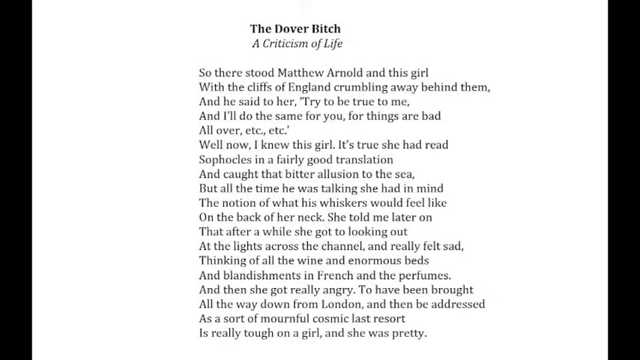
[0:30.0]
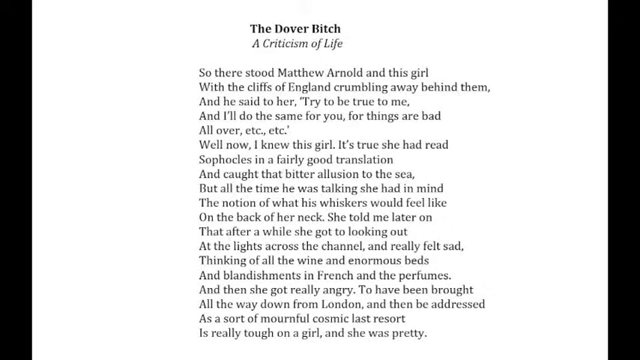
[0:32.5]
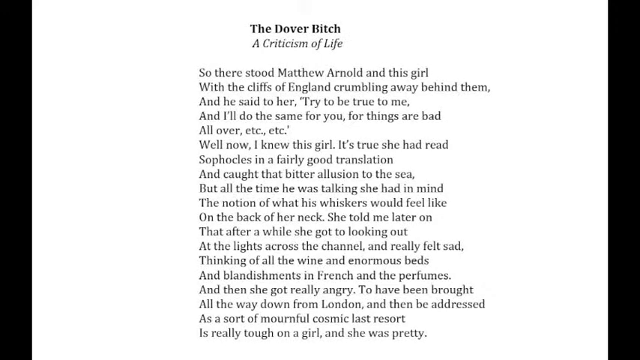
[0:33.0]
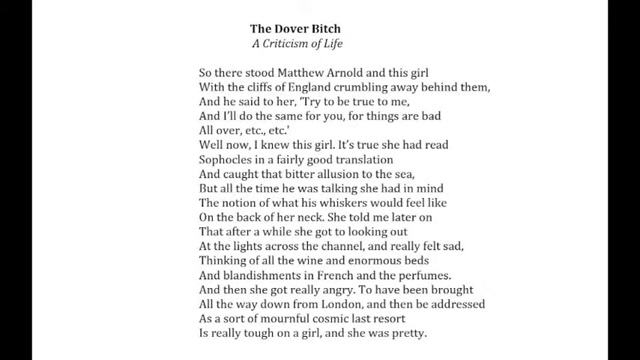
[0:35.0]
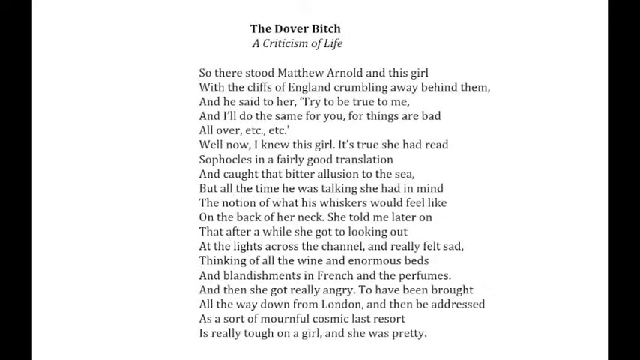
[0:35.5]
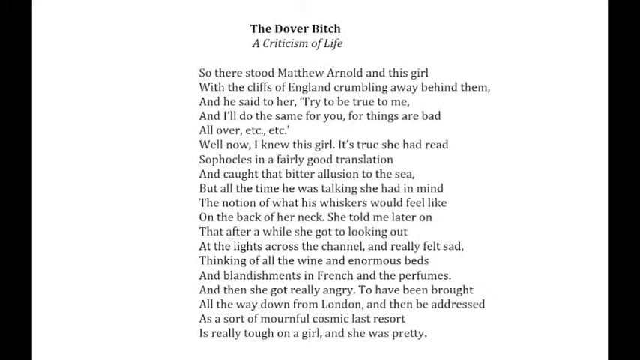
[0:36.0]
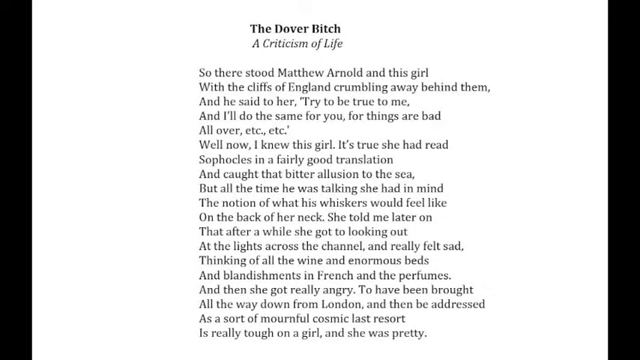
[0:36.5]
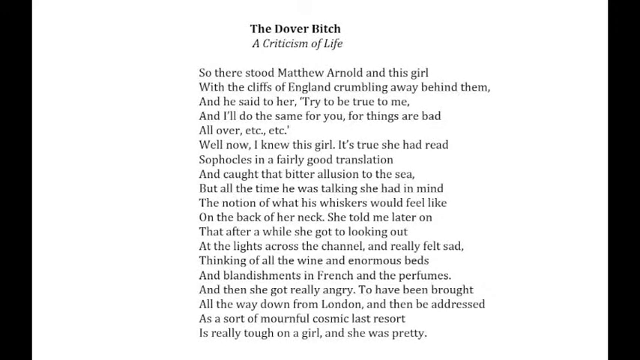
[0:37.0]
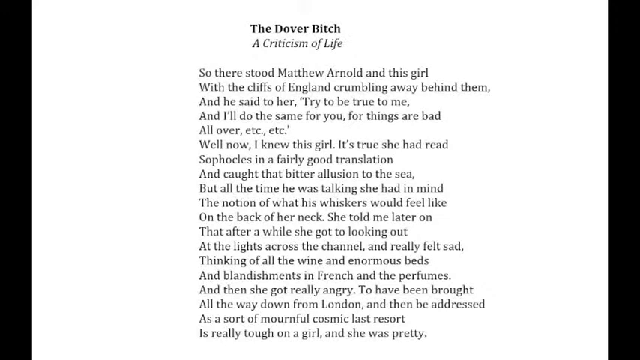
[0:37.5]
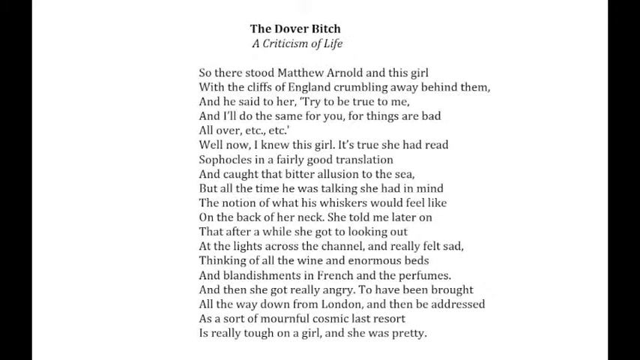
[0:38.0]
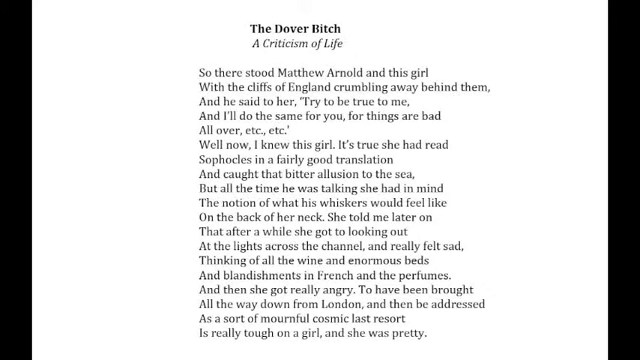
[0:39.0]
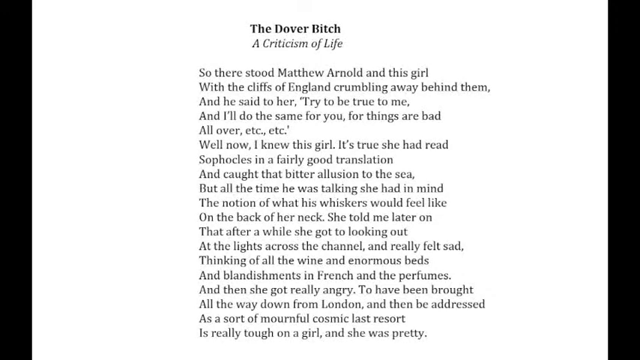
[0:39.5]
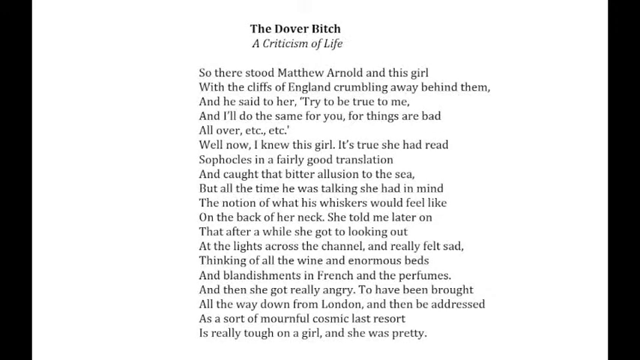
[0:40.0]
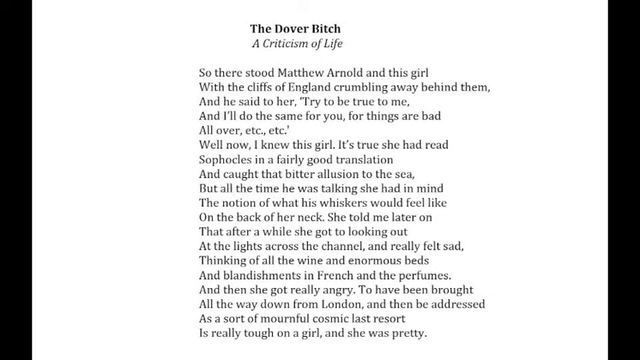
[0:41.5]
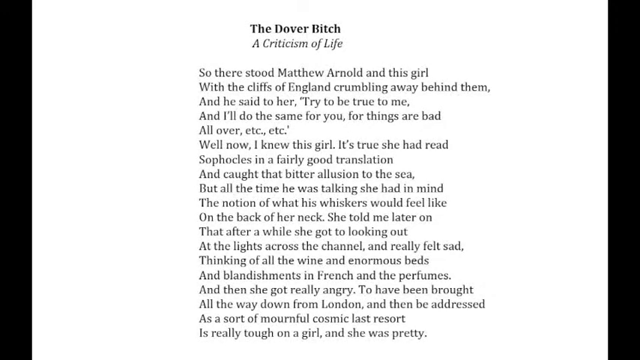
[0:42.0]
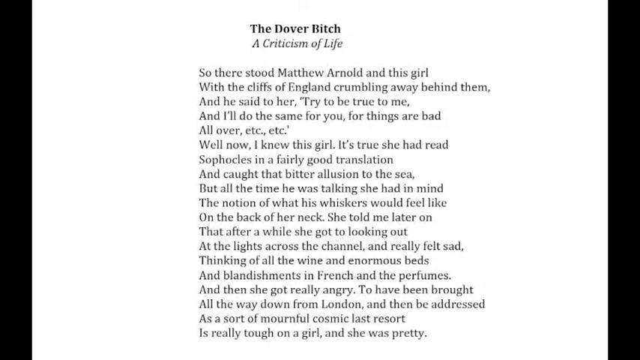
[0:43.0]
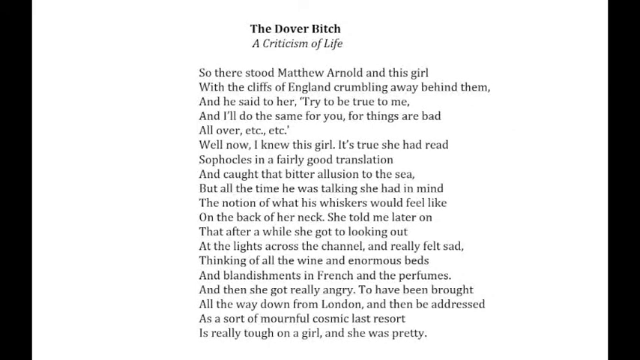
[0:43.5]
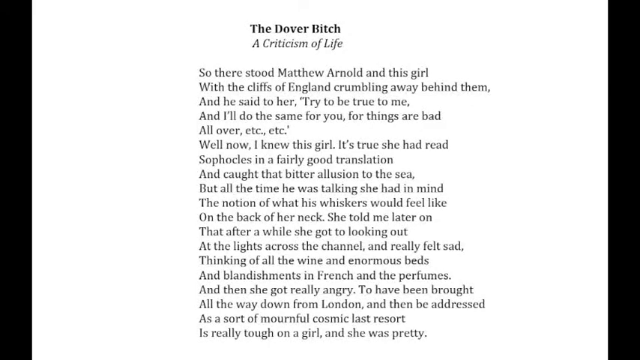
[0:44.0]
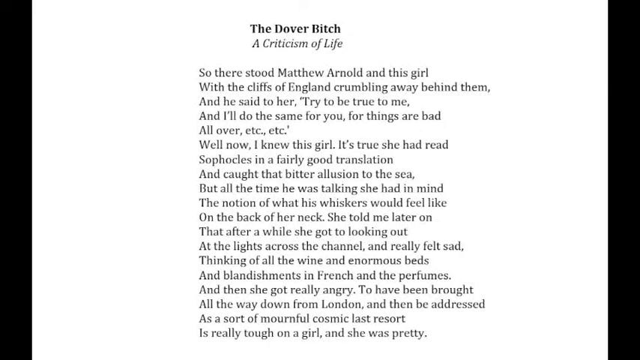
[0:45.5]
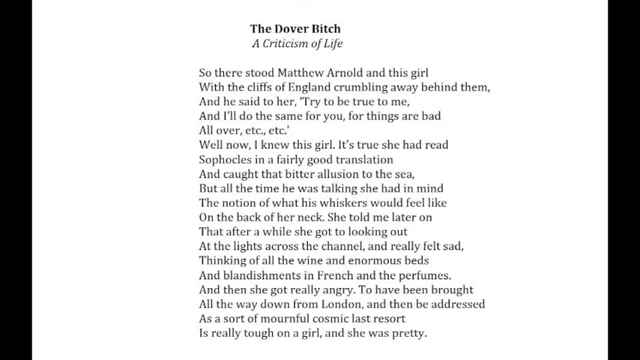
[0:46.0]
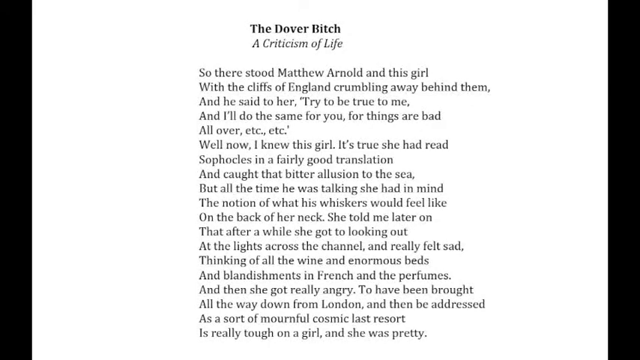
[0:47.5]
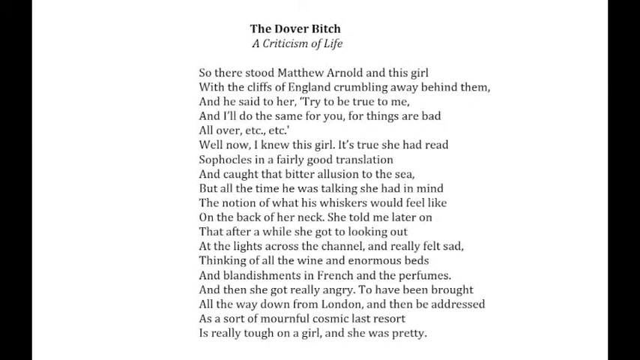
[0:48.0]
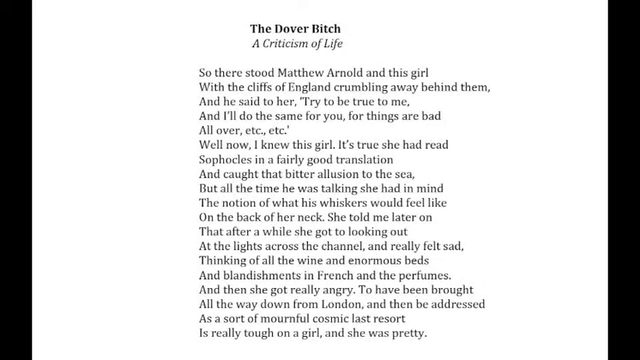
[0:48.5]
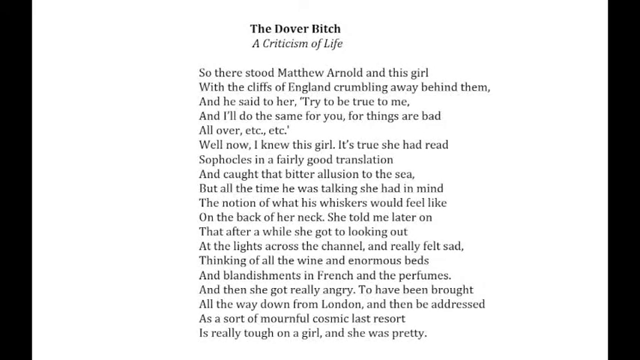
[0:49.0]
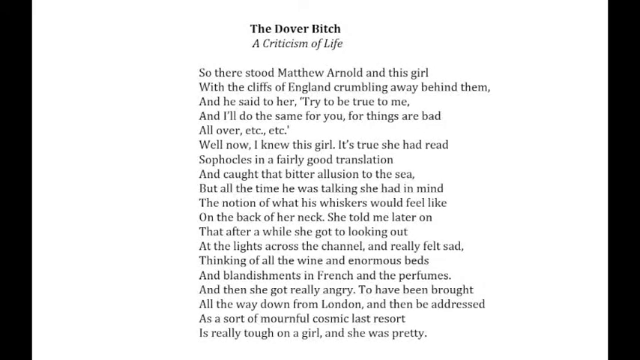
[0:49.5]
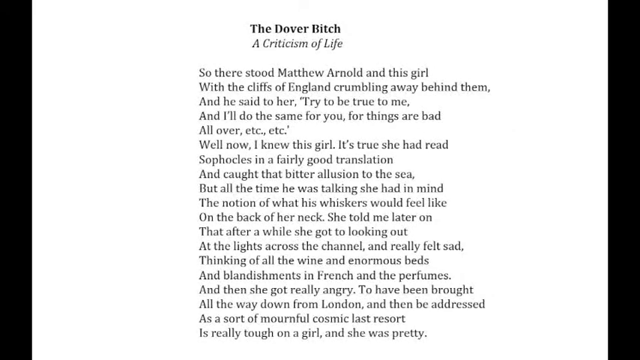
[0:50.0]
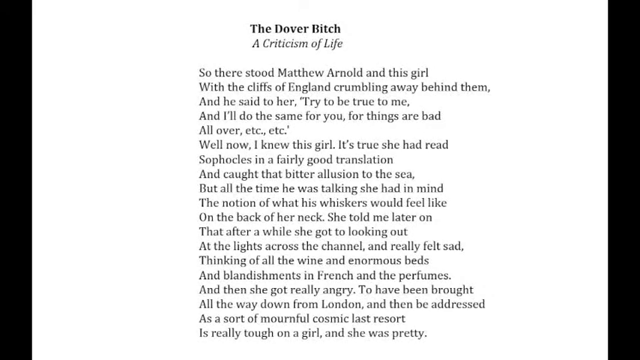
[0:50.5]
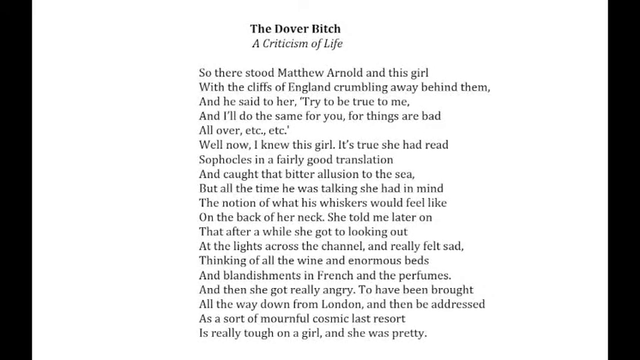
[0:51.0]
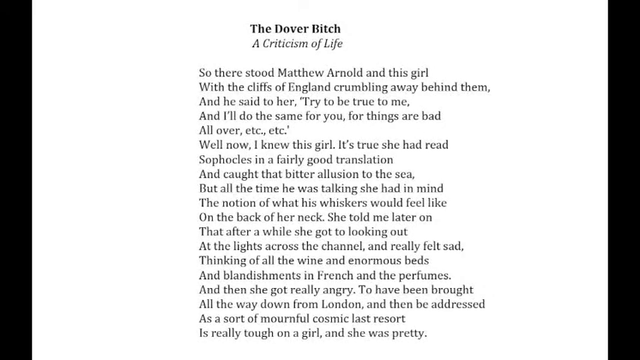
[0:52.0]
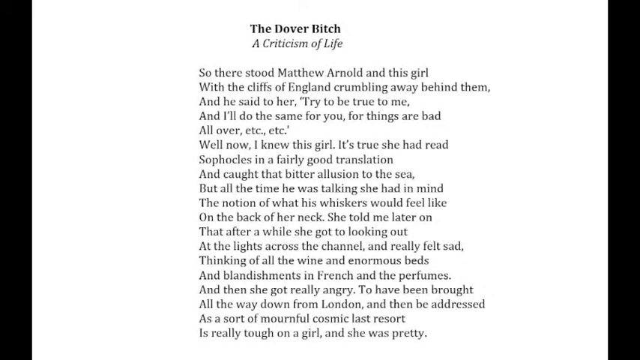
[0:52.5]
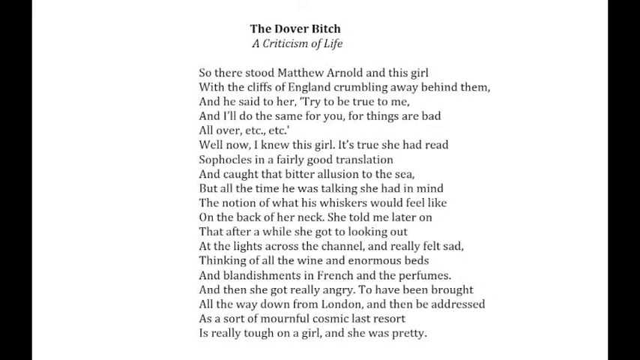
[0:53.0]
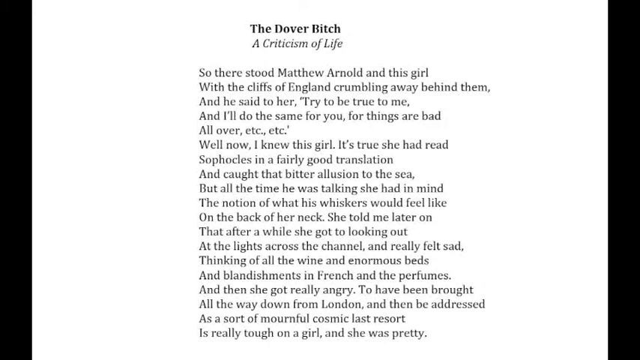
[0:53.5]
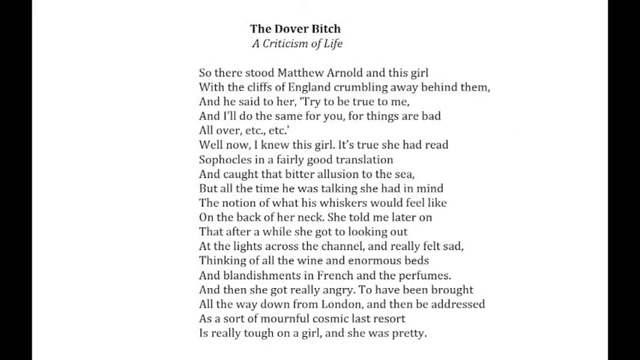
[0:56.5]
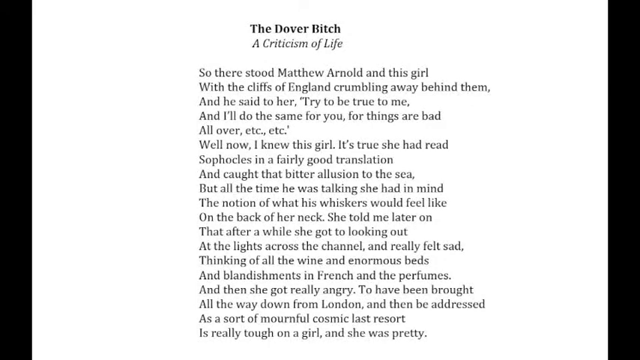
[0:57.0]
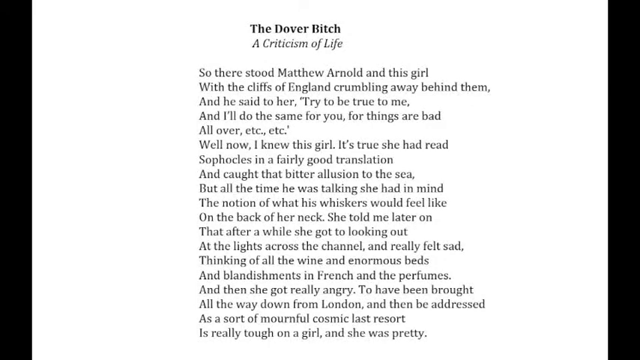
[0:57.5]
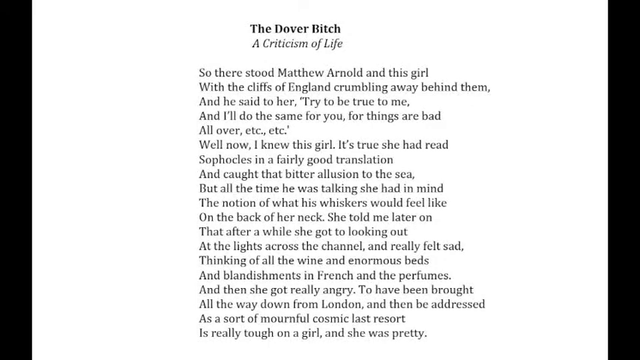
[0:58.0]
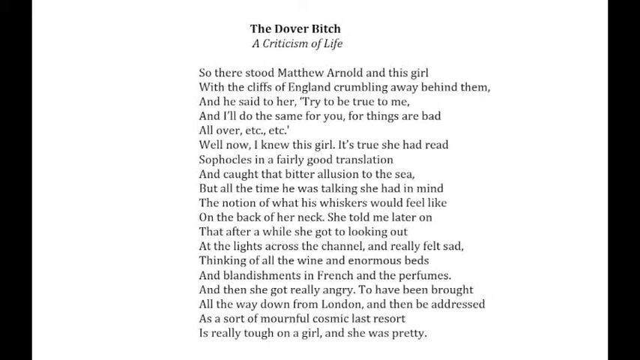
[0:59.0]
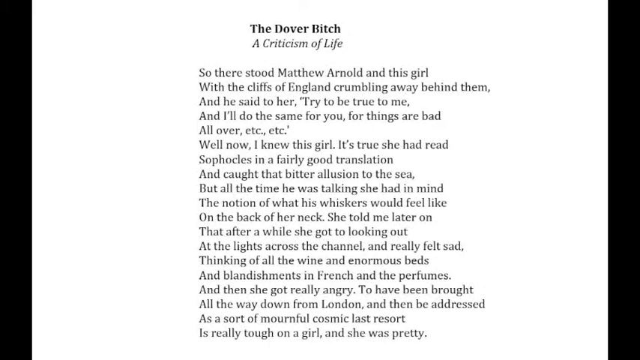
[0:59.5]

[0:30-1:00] The title "the Dover bitch" looks like it is probably 14-point bold font, and the line underneath is probably about 14 point but italicized. The title is a little off center, with slightly more width to the right of "bitch" than to the left, but "the Dover bitch" and "a criticism of life" are centered on top of one another. The typed lines below are left aligned and probably indented about three spaces. Quotation marks are used when something is said aloud; the text starts with a quotation, "try to be true to me", followed by "etc, etc", but there is only one quotation mark instead of two, almost like an error. No year or author is shown. It is a plain document, with black bars to the left and right of it.